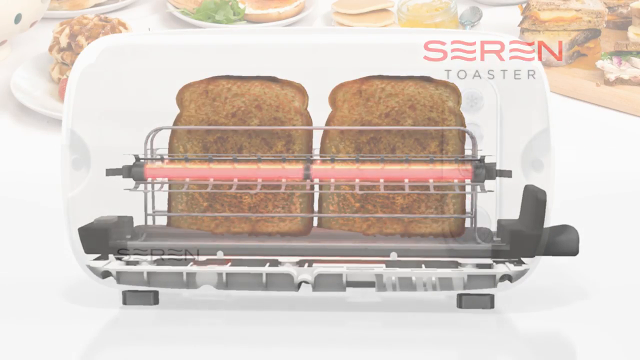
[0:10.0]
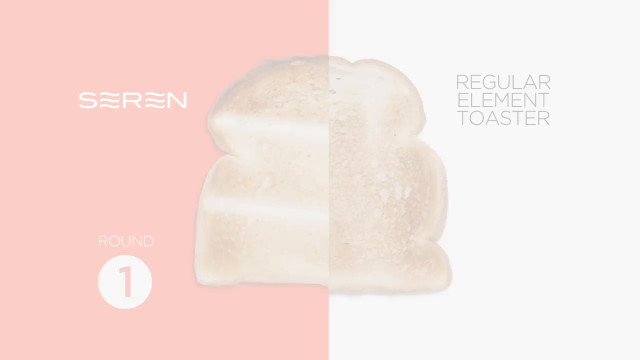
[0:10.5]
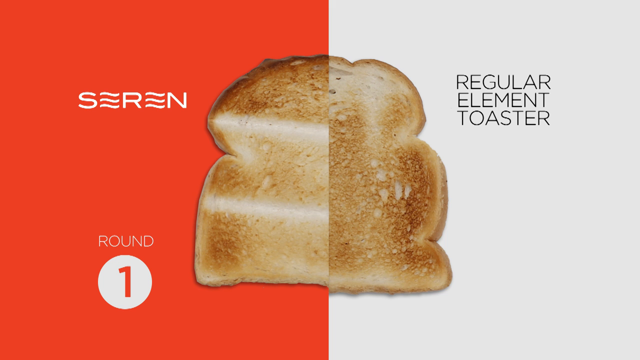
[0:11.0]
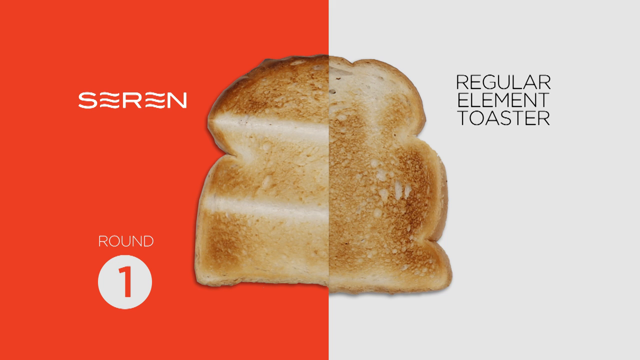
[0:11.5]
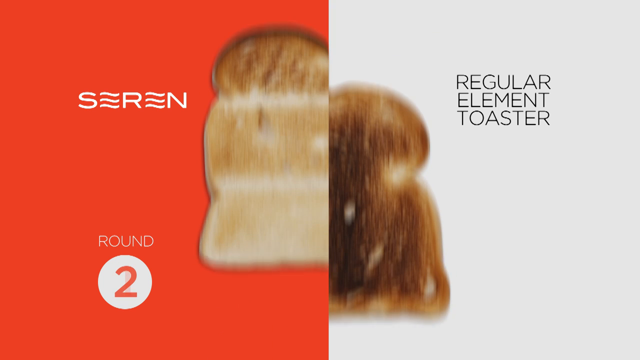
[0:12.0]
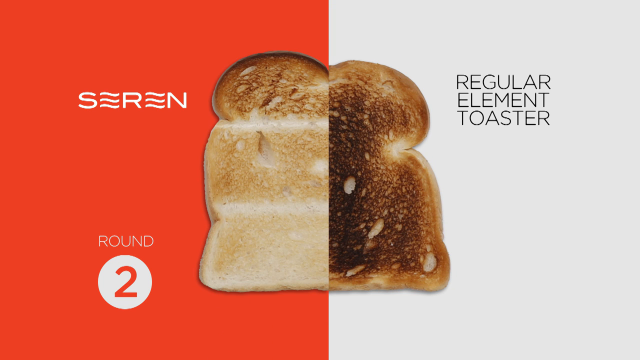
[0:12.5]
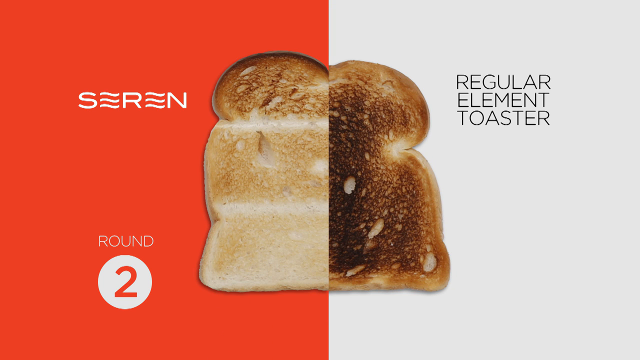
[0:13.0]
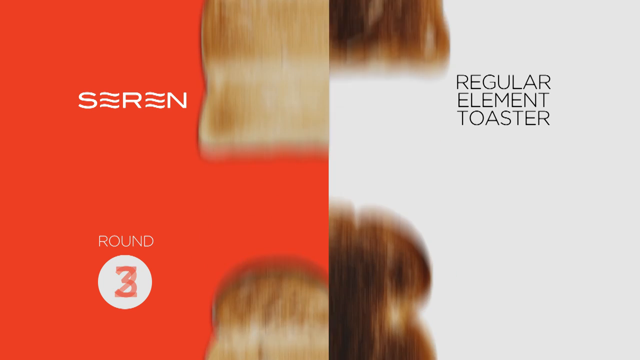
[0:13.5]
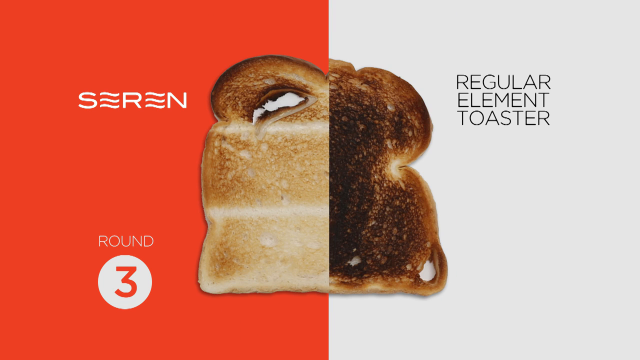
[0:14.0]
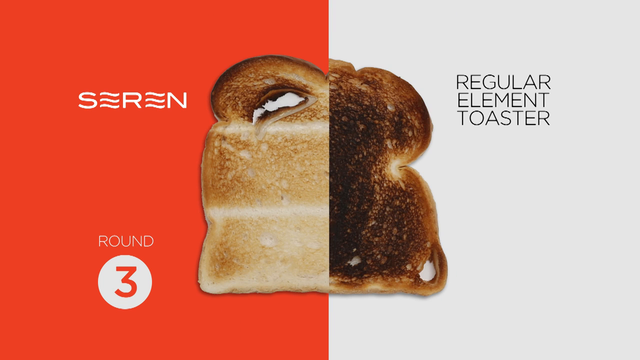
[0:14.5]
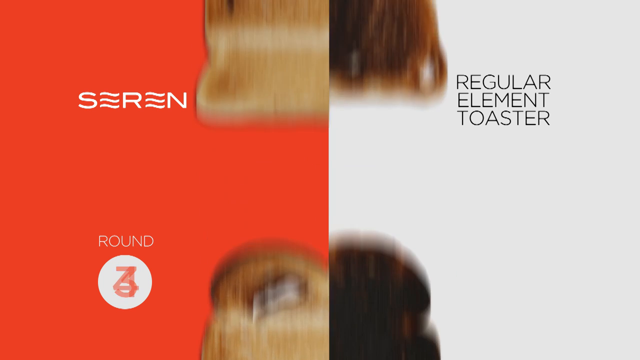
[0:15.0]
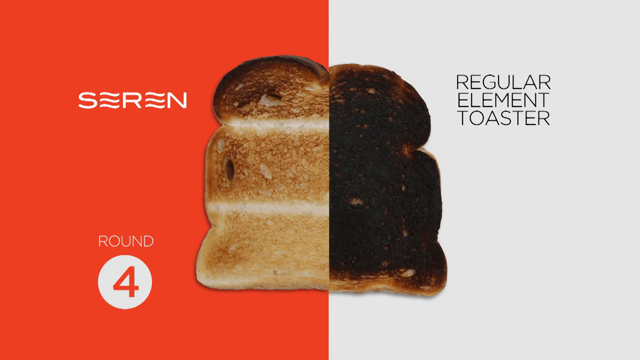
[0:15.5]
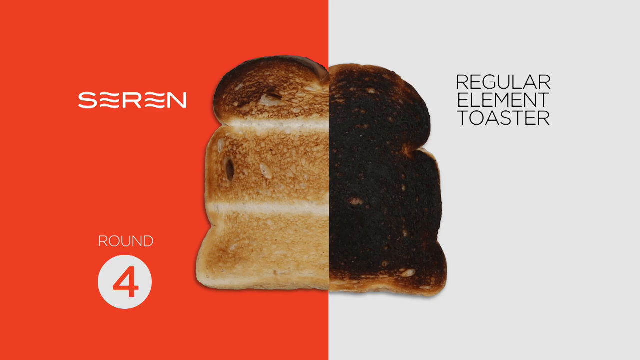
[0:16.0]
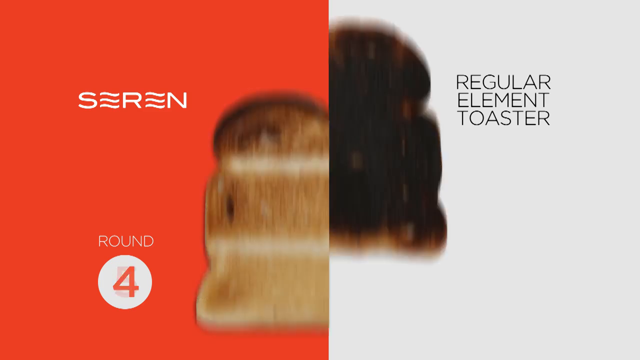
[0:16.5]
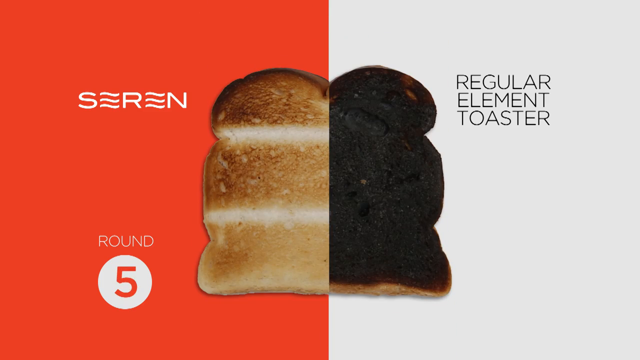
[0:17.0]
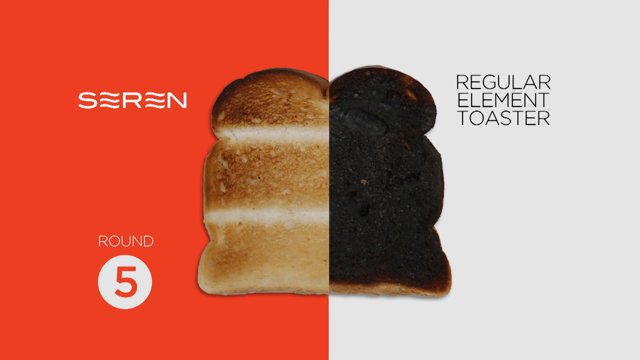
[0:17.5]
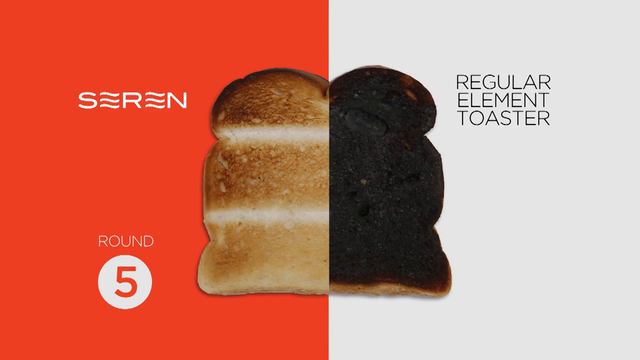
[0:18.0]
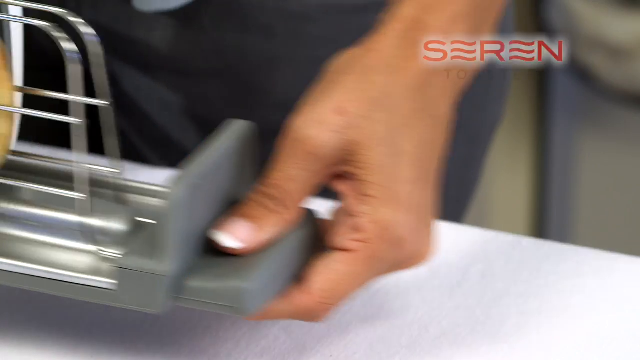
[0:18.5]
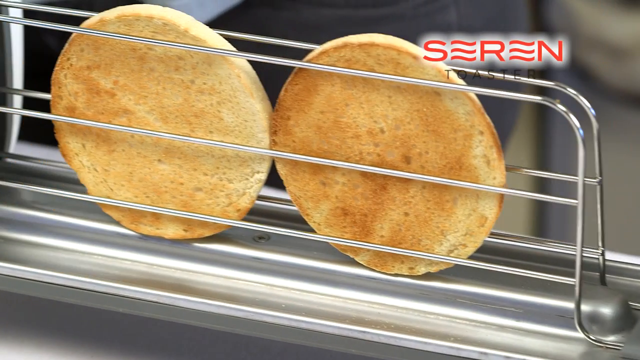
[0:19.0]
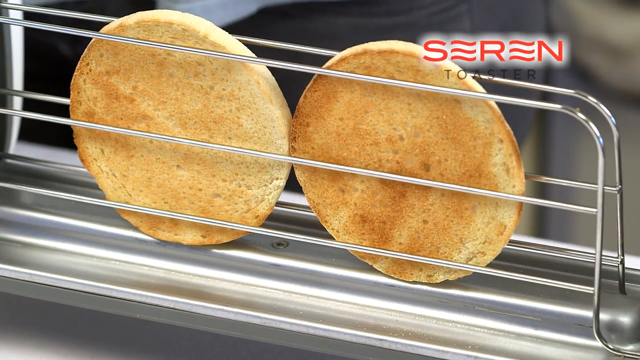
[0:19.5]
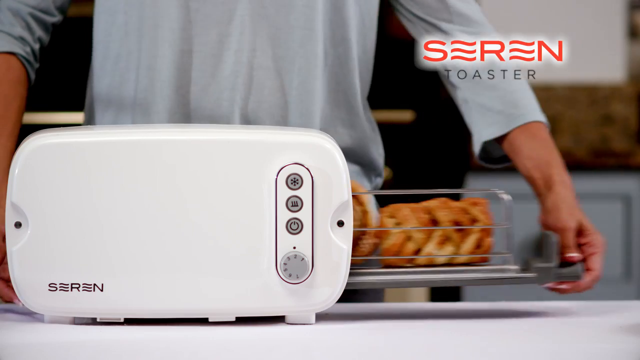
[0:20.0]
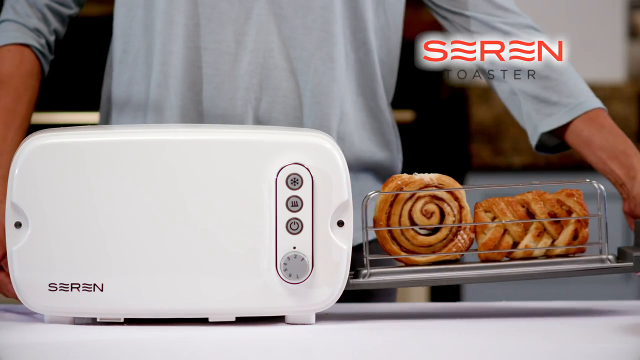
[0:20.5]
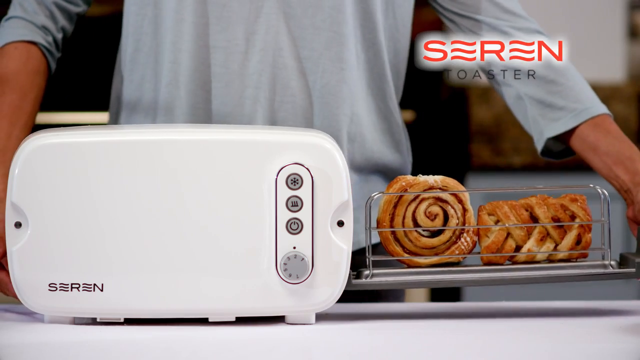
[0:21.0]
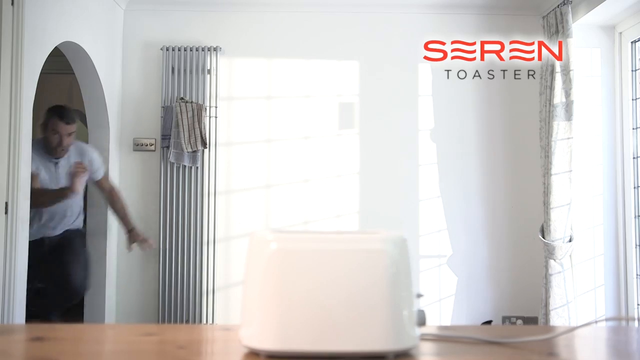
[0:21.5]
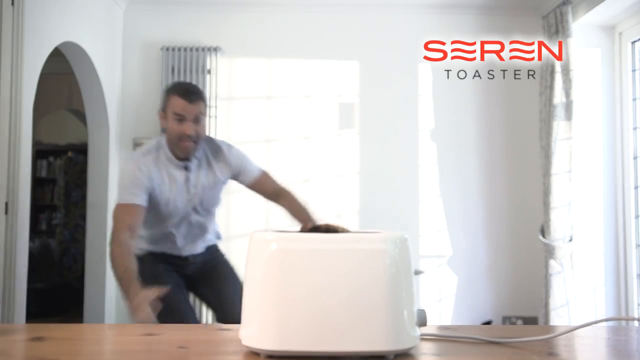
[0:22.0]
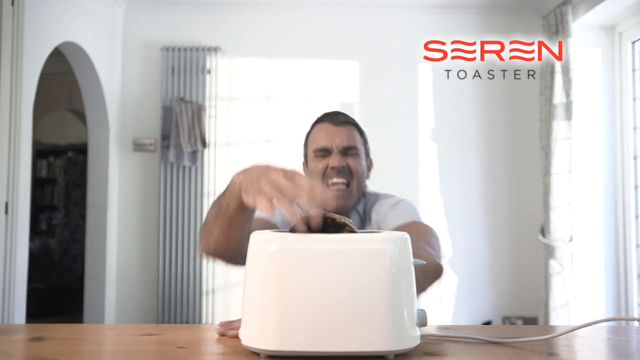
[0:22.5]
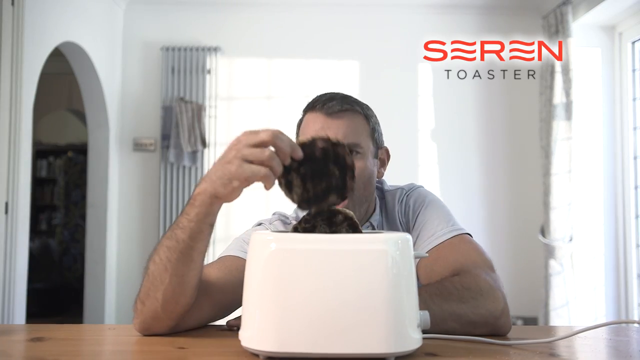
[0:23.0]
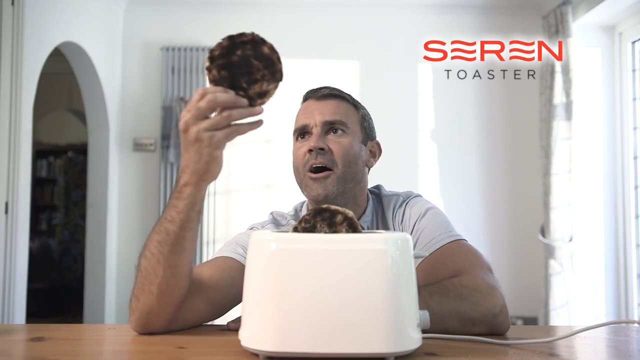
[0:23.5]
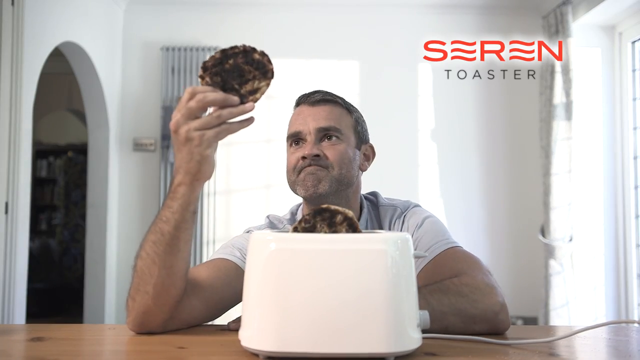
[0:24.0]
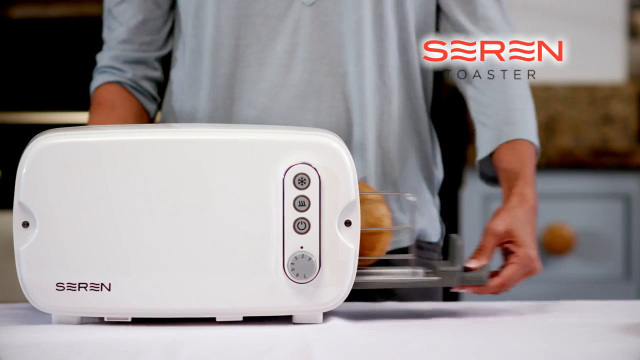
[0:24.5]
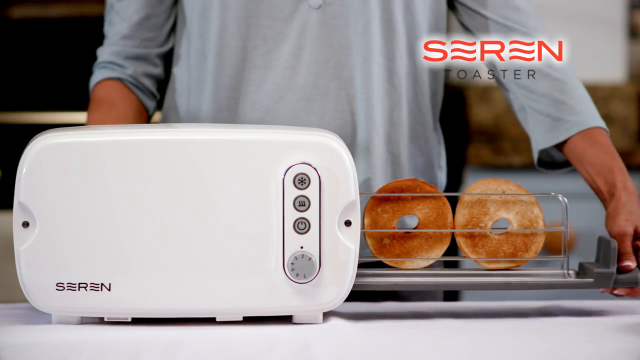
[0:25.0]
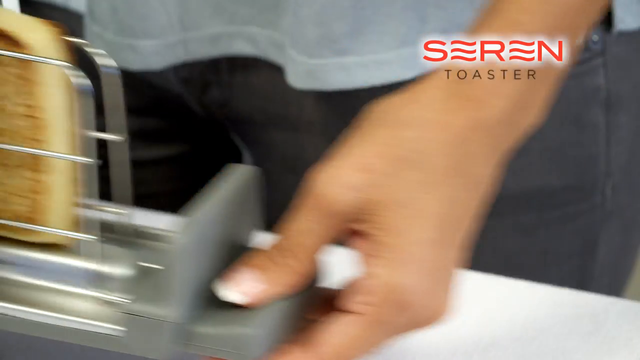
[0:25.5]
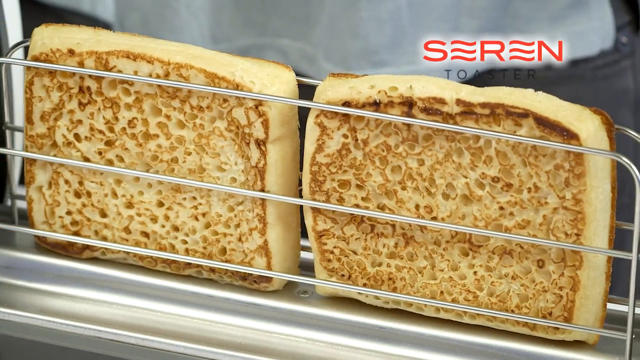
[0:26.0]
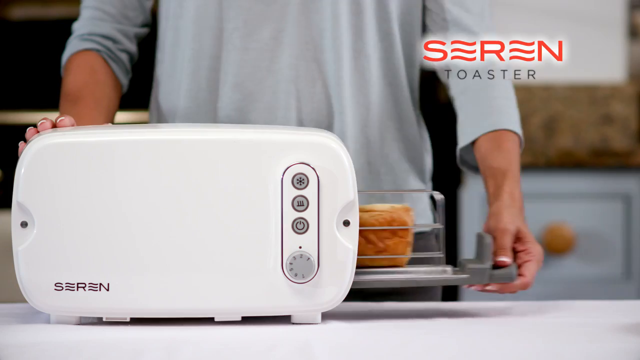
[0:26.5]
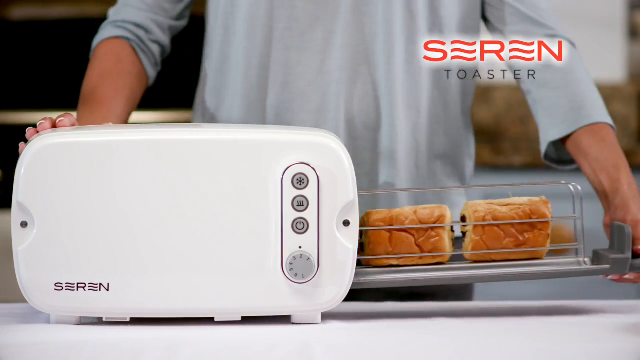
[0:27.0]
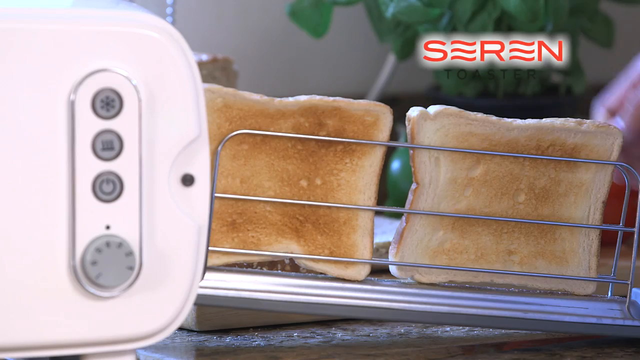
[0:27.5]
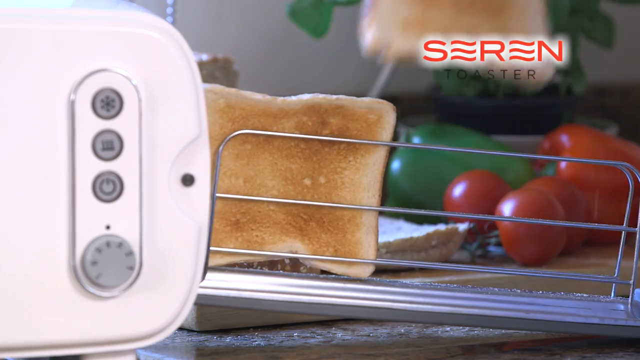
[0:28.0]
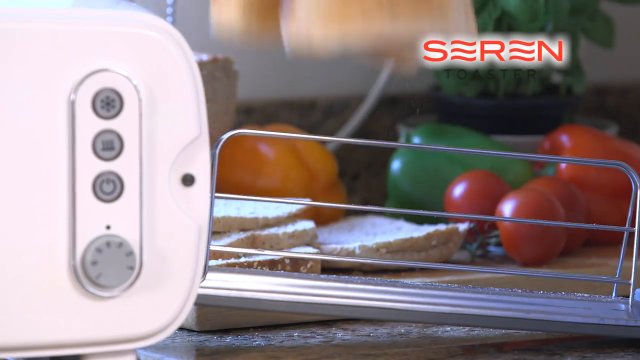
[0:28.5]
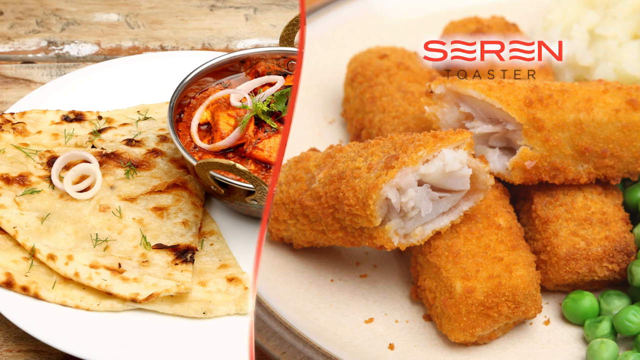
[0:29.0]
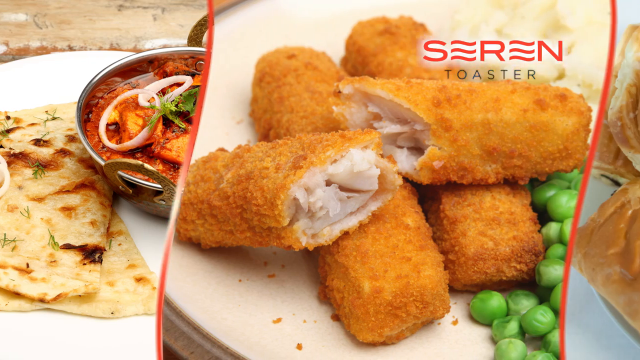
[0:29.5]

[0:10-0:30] A red square taking up the right side of the screen reads "Seren", and a light gray section reads "regular element toaster". A series of screens is labeled "round 1", "round 2", "round 3", "round 4" and "round 5", with a piece of toast superimposed across the two background colors, the pieces flashing up one at a time. On the Seren side, the bread goes from very lightly toasted in round 1 to medium dark toasted in round 5, while on the regular element toaster side it goes from medium toasted to completely charred by round 5. The rack is then pulled out of the toaster holding what are probably bagel thins, very thin and toasted golden brown, with the Seren logo in the upper right-hand side. The demo man in his light aqua shirt, only his torso visible, pulls the rack out of the Seren toaster, showing a cinnamon bun and a square pastry of some sort. The video cuts to a crazy-looking white man with very close-cropped dark hair in a white short-sleeved T-shirt, running toward a different brand of white toaster with about a third of a burnt bagel poking out of it. He grabs the burnt bagel half out of the top of the toaster, leans down in front of the toaster, and looks up at the burnt bagel in his right hand, holding it above his face, with a look of complete dismay. Next, the aqua-shirted demo man pulls the rack out of the side of the Seren toaster again, showing lightly toasted, golden brown English muffin bread. The demo man then pulls the rack out with what might be two sausage rolls. Two pieces of lightly toasted bread are taken off the rack. The final scene is a split screen: on the left, a toasted quesadilla on a white plate with salsa in a silver bowl; on the right, golden fish sticks with a few peas on a white plate, one opened up to show white fish inside. For just a quarter of a second, an image shows two sweet rolls that maybe were toasted in the Seren toaster.